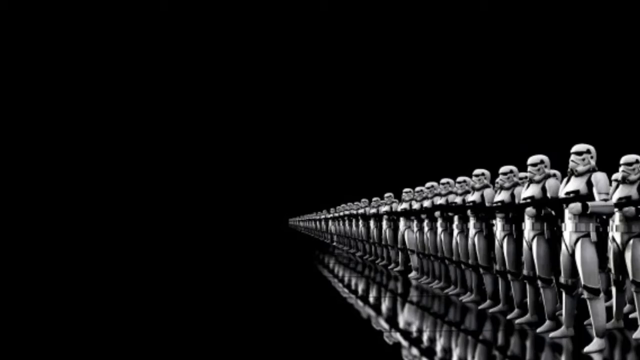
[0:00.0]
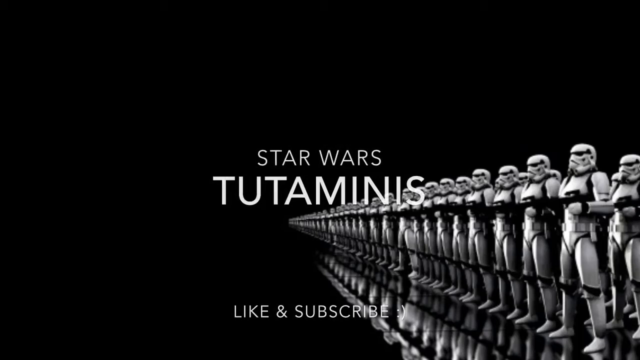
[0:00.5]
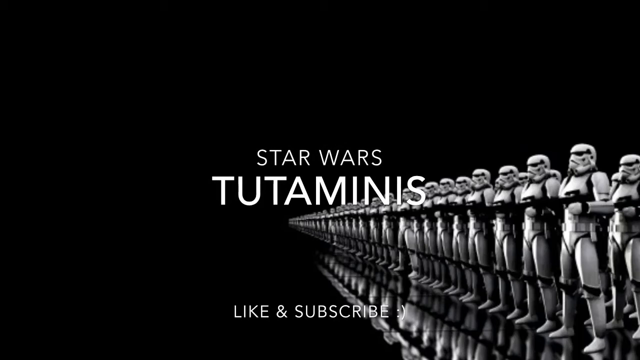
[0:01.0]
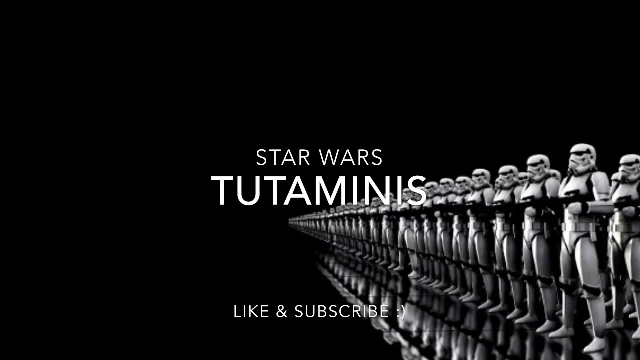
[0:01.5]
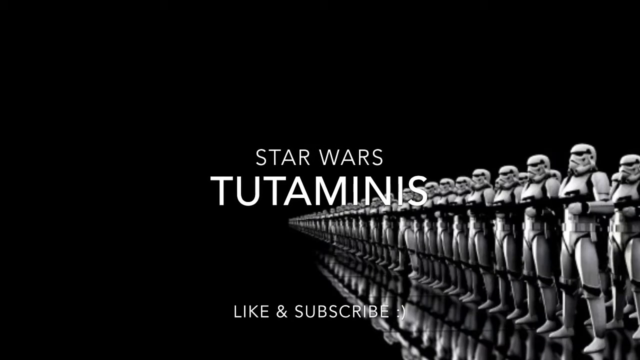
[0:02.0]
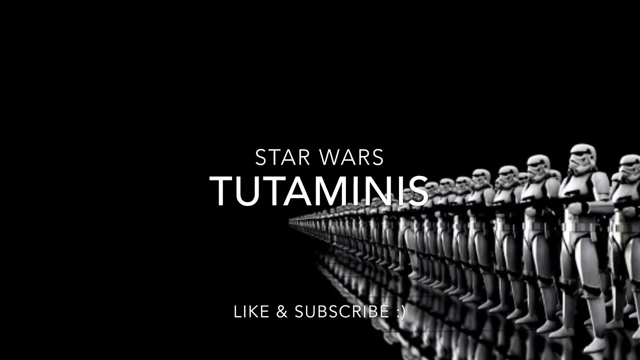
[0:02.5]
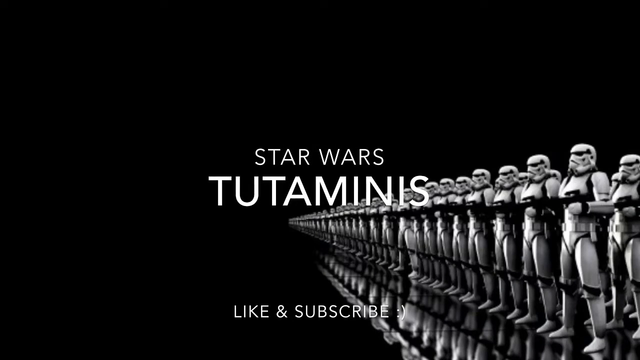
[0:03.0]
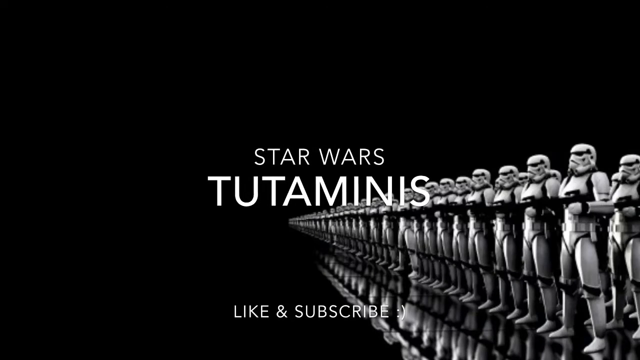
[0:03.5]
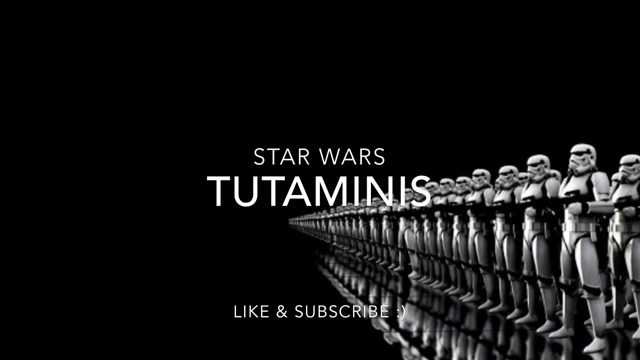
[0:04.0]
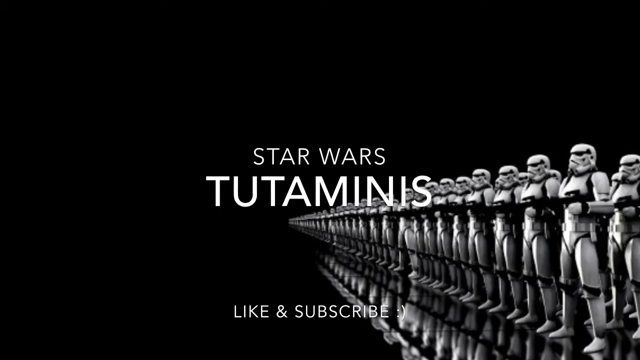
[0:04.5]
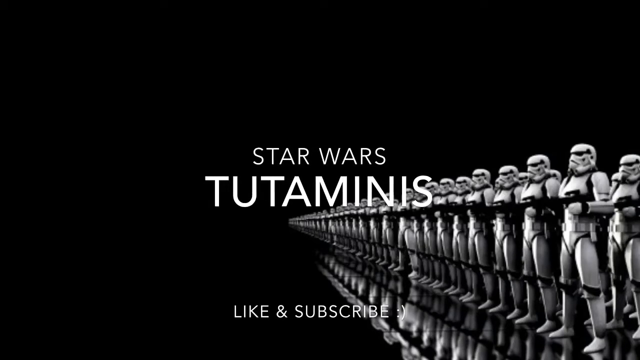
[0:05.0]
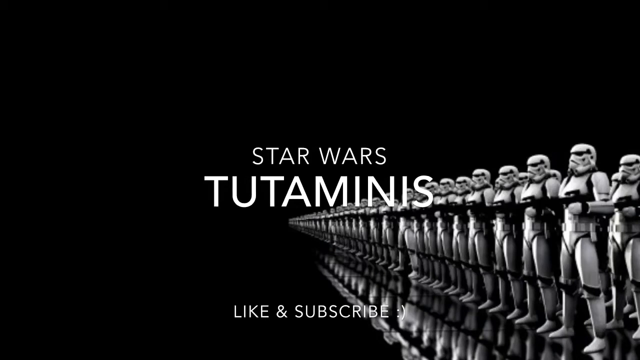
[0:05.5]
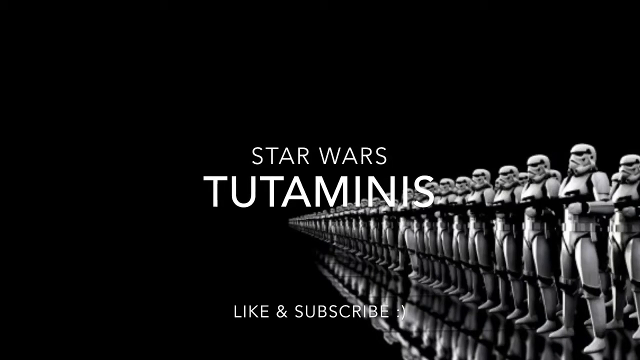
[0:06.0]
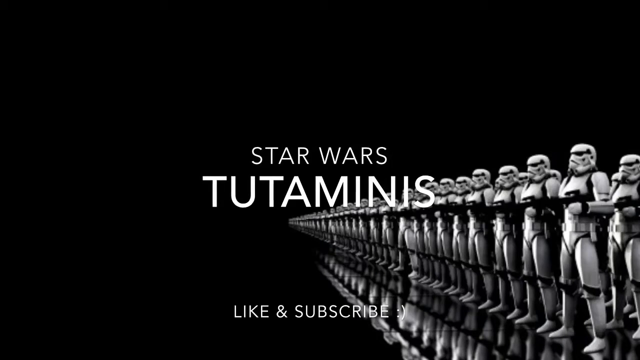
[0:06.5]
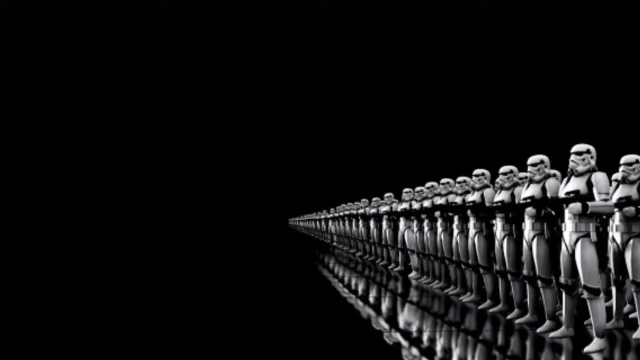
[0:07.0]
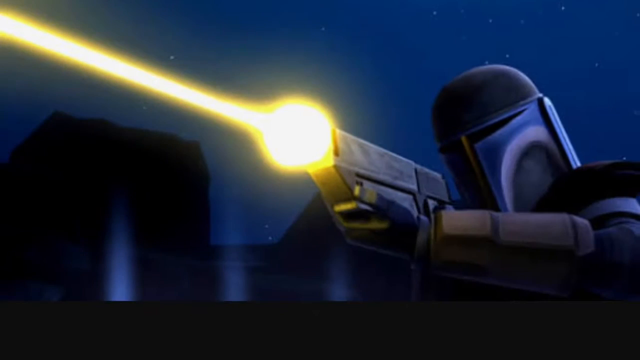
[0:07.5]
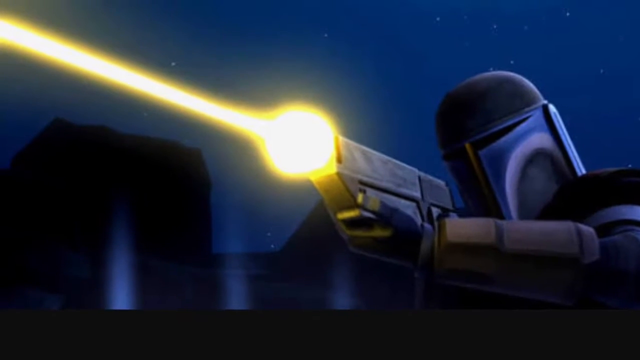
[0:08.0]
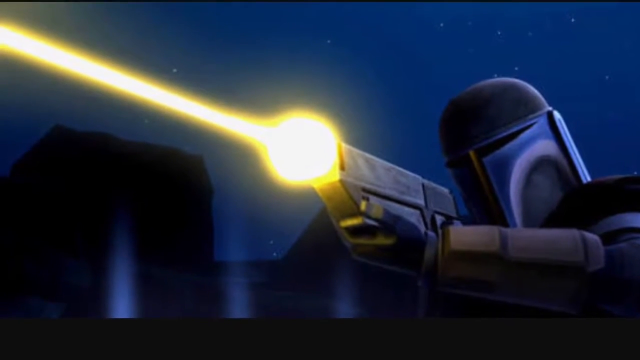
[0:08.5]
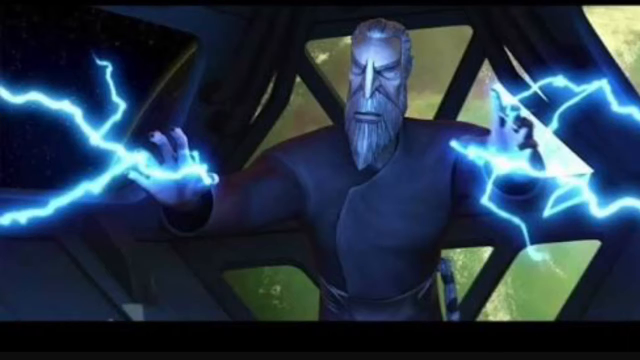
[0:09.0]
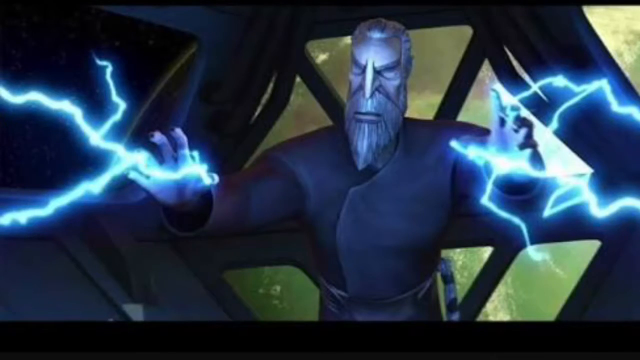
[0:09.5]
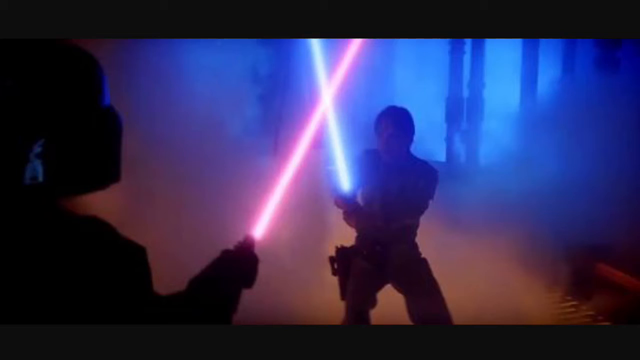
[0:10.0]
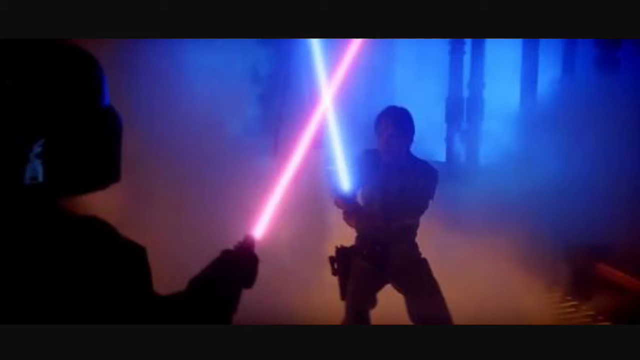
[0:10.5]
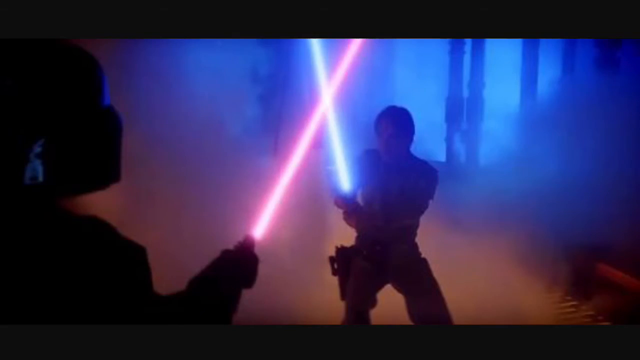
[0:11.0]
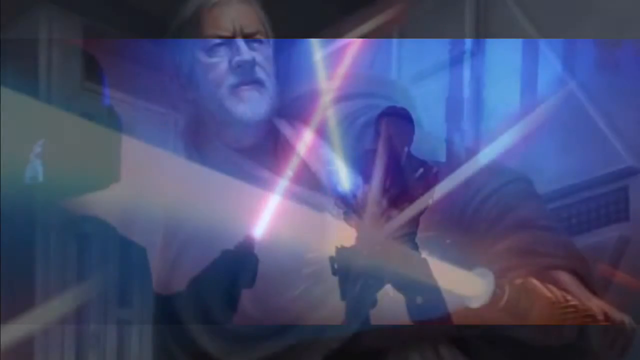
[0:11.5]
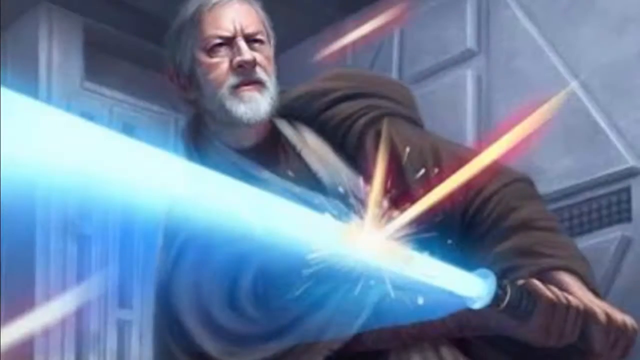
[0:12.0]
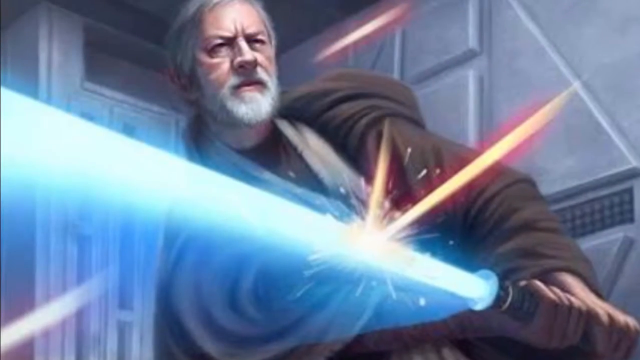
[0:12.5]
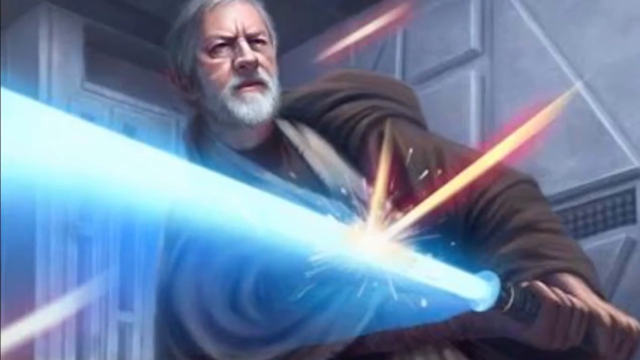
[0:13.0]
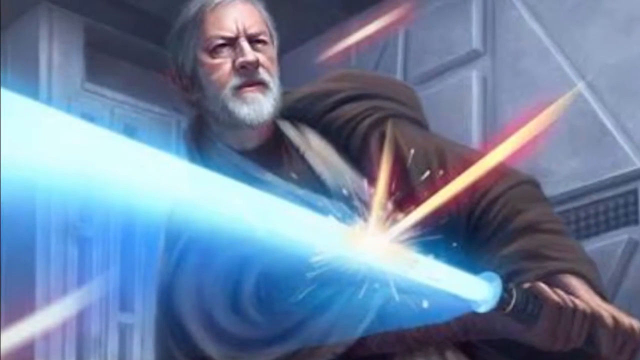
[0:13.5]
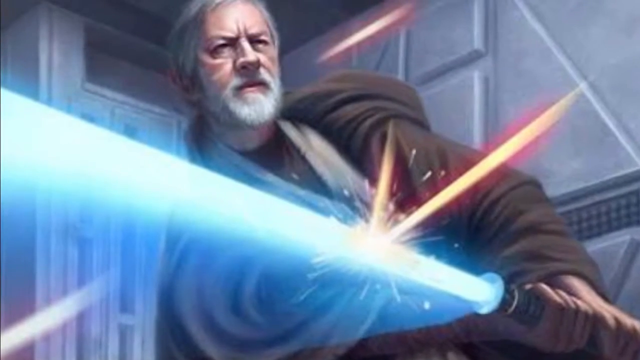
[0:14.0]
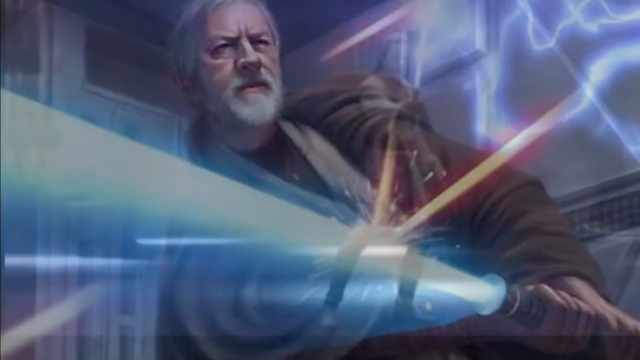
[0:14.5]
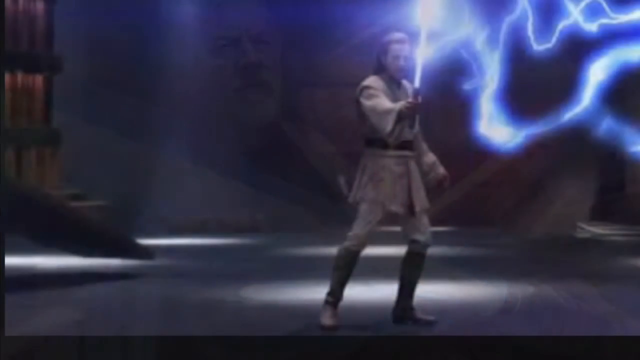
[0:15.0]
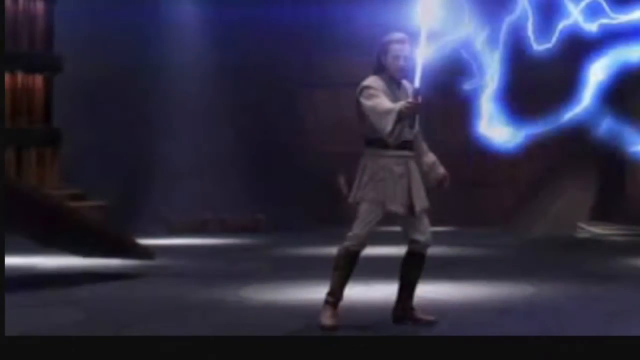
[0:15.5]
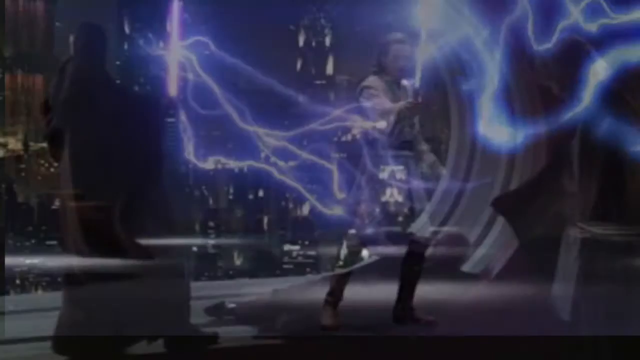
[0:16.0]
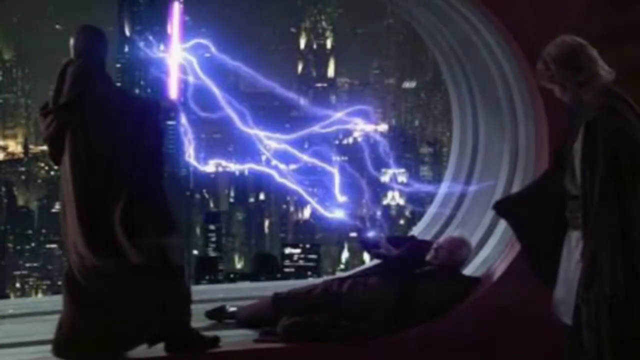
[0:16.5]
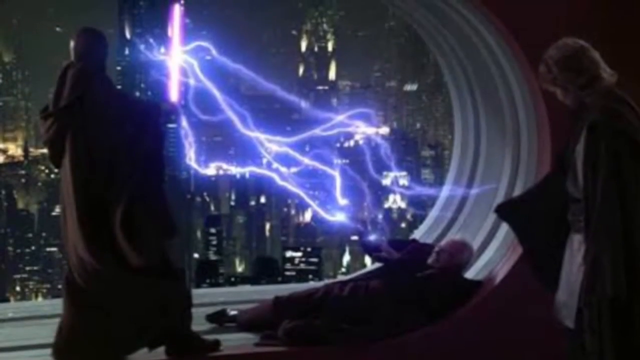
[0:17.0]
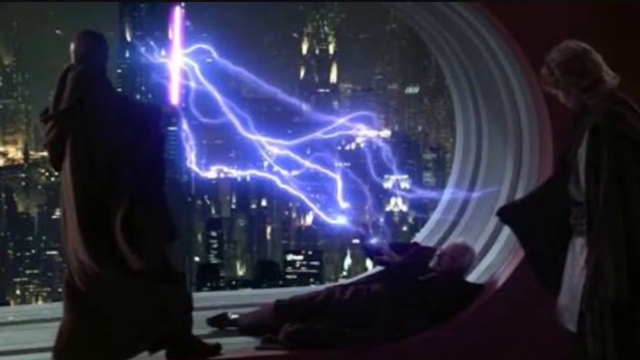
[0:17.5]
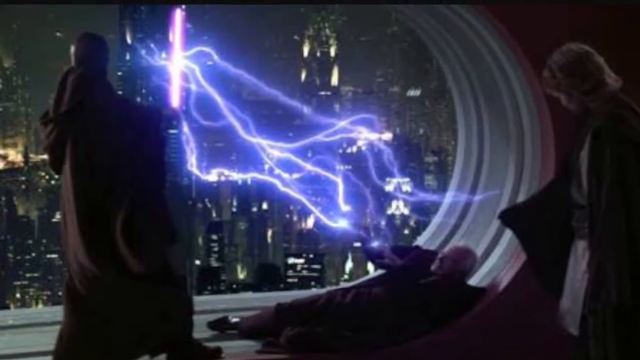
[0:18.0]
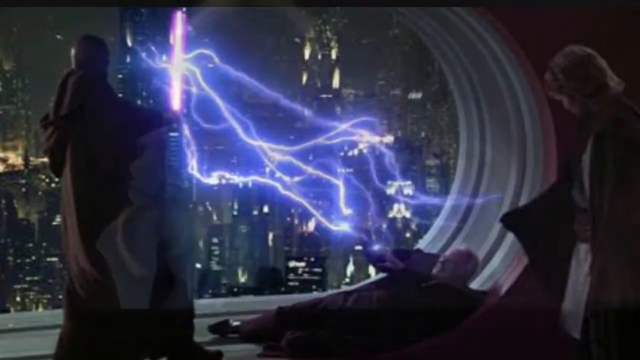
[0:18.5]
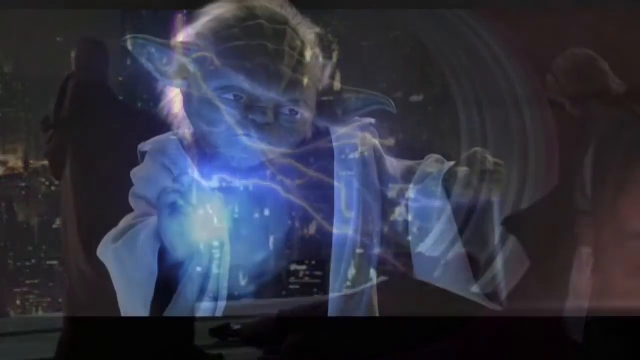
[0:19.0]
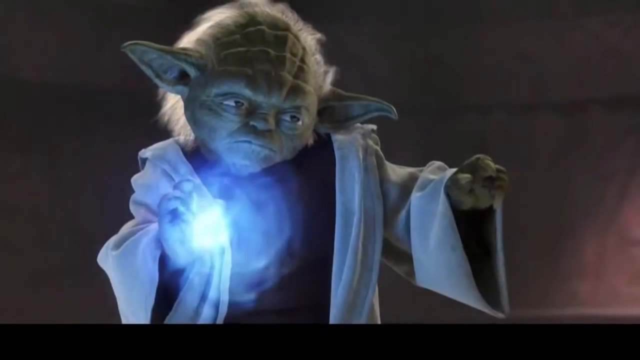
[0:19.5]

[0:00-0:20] Star Wars Tsunamis shows several robots lined up. One robot is shooting a gun, and another is shooting lightning. A man uses a flashlight to create a lightning tunnel. Heroes fight with their powers against evil: there is lightning, a sword fight, and a flashlight, and he is creating lightning. Robots are lined up carrying guns, and the heroes fight together. Some use their powers to create lightning, while others use their powers to fend against bad people.